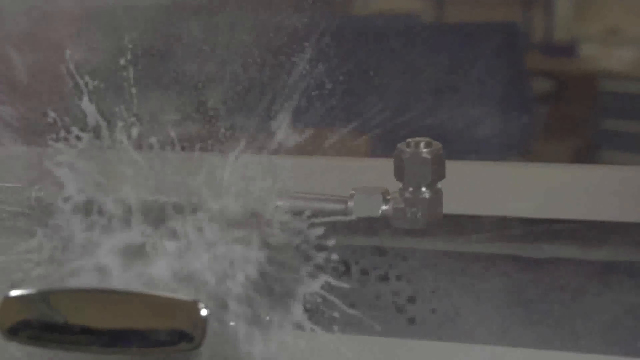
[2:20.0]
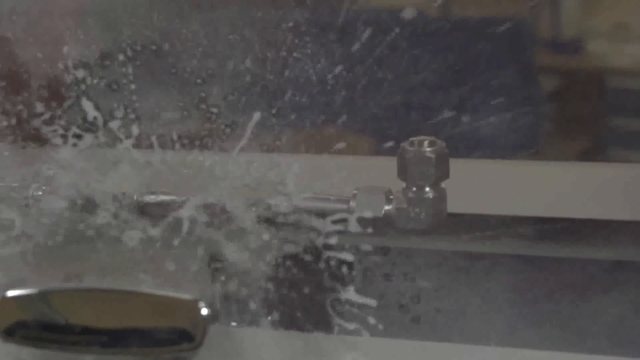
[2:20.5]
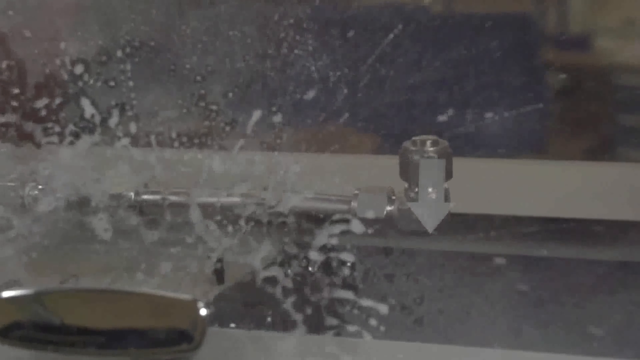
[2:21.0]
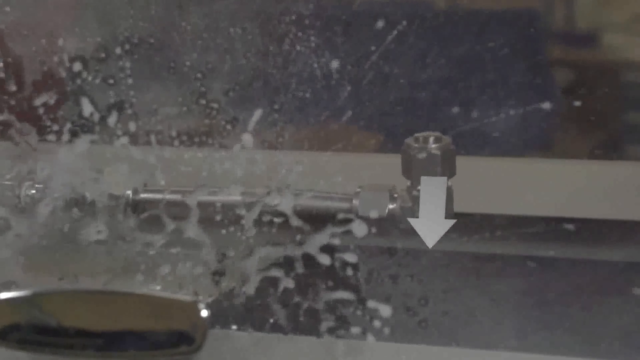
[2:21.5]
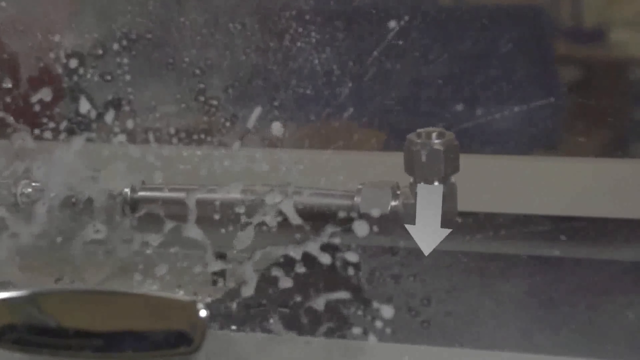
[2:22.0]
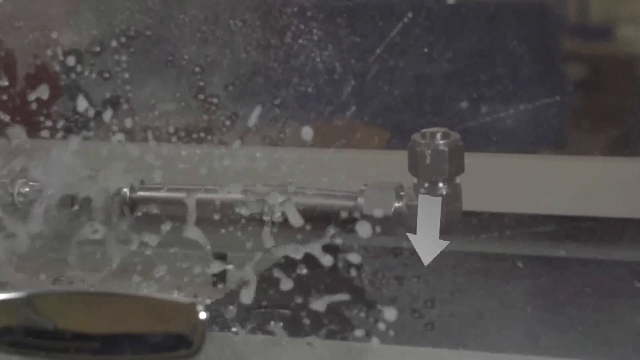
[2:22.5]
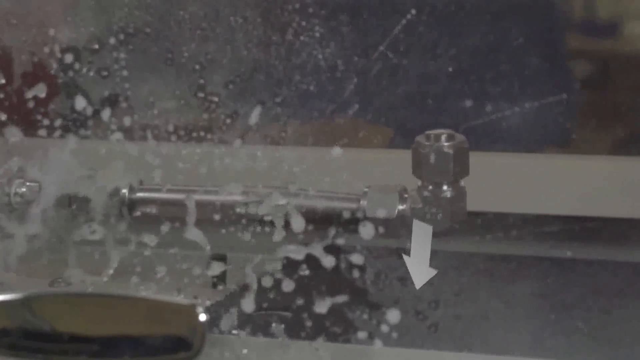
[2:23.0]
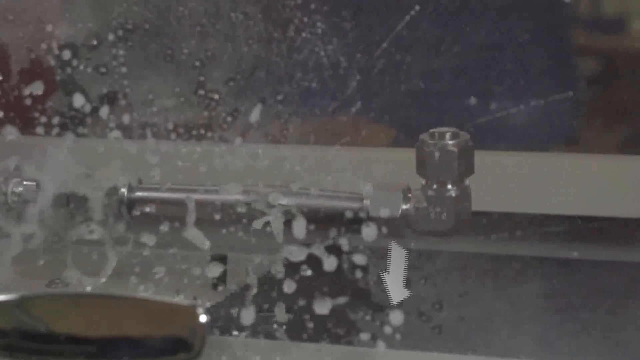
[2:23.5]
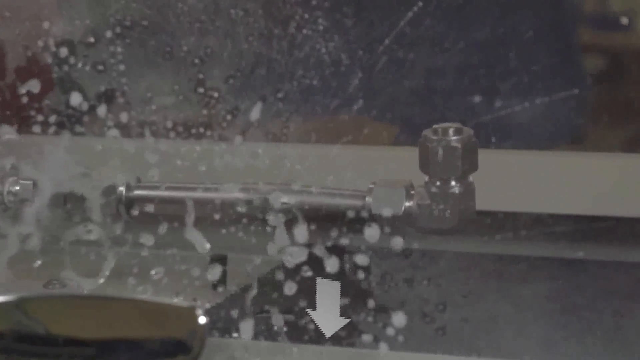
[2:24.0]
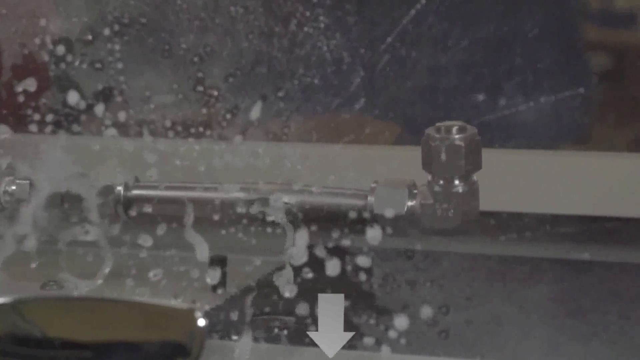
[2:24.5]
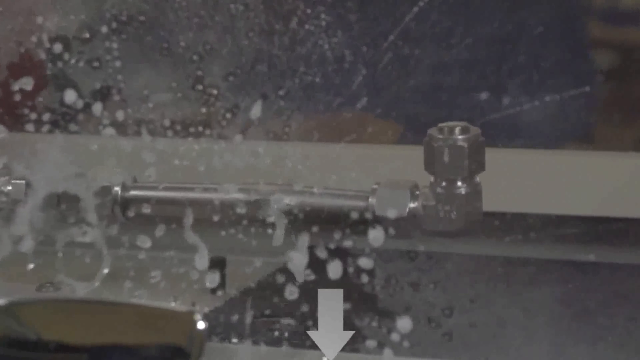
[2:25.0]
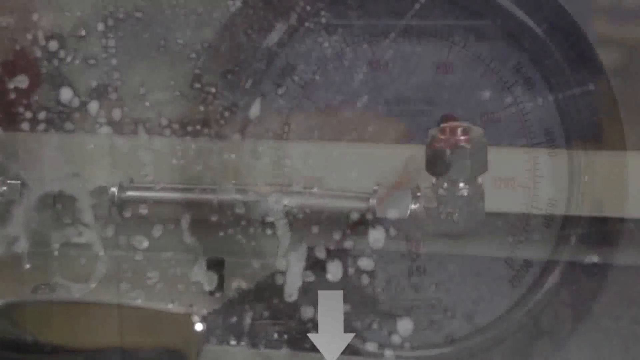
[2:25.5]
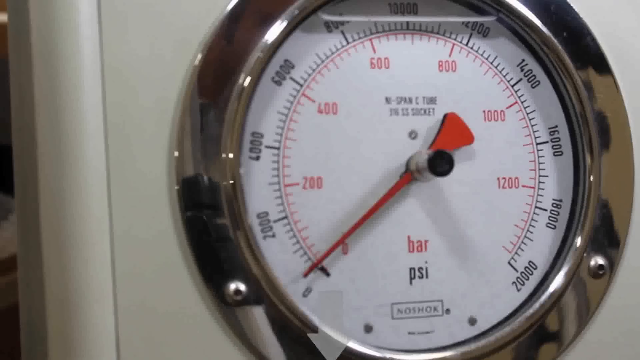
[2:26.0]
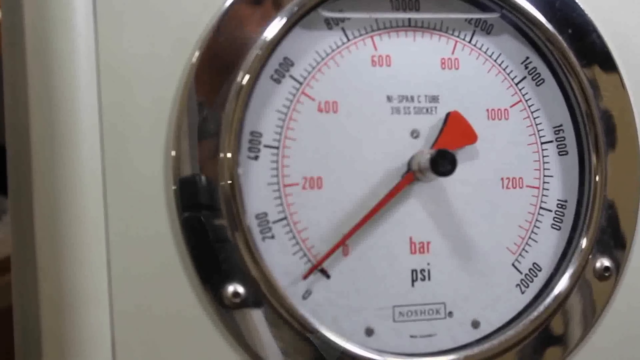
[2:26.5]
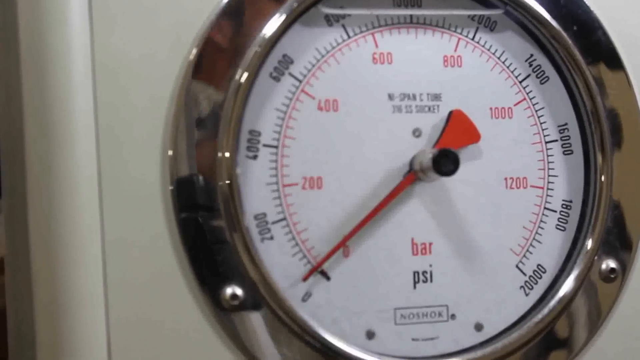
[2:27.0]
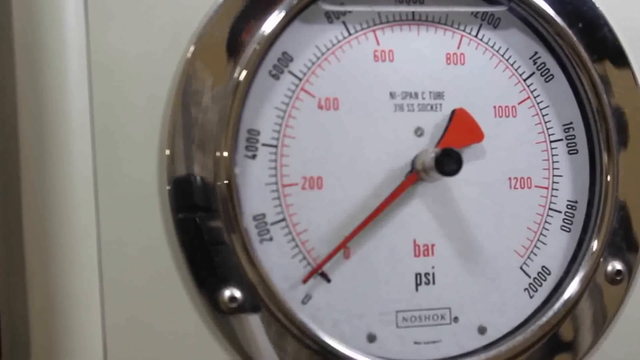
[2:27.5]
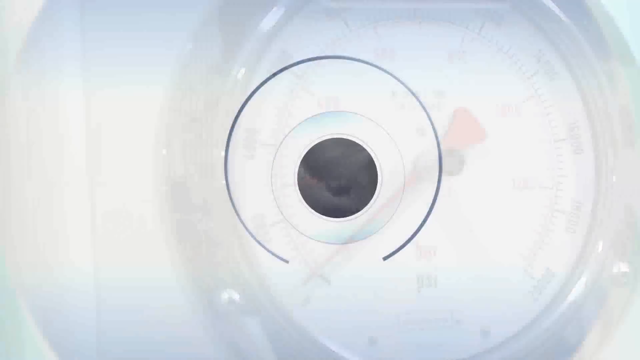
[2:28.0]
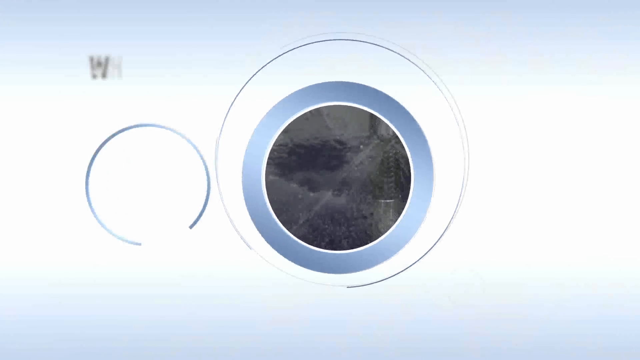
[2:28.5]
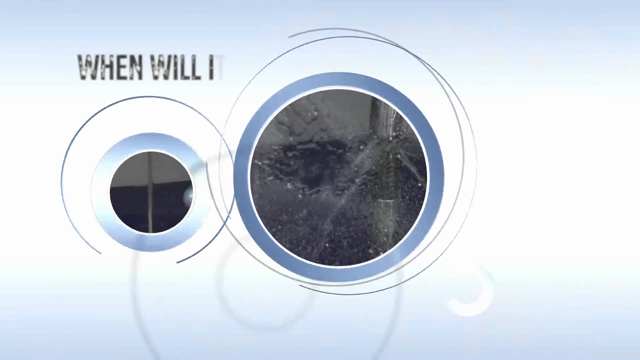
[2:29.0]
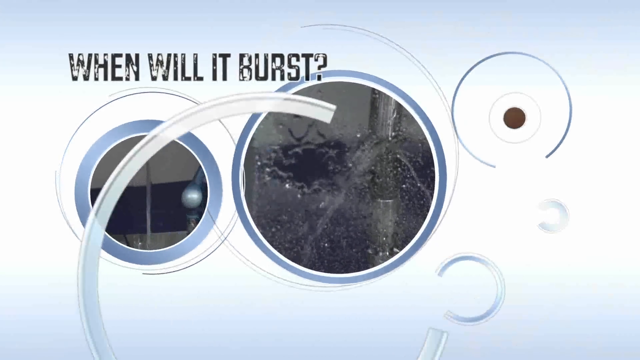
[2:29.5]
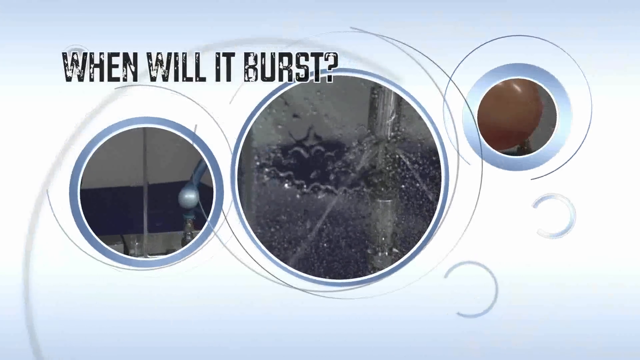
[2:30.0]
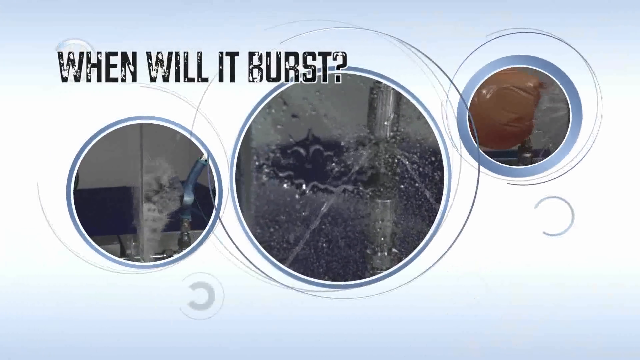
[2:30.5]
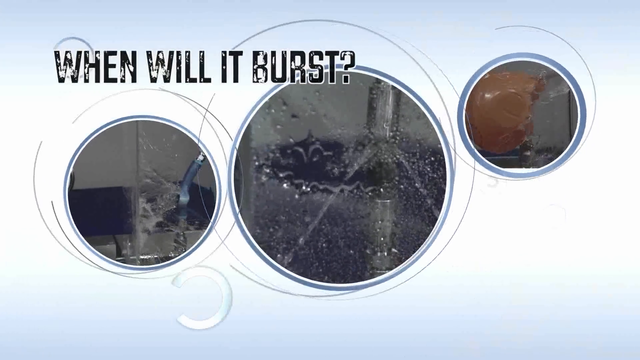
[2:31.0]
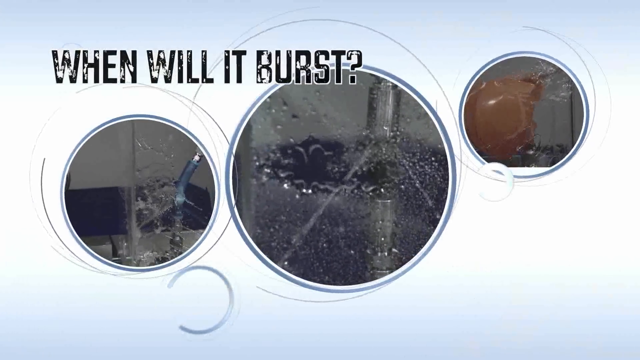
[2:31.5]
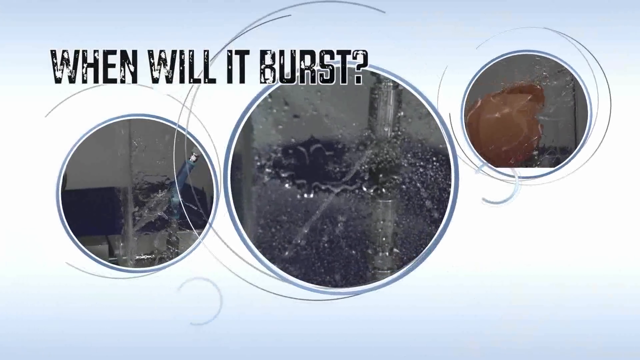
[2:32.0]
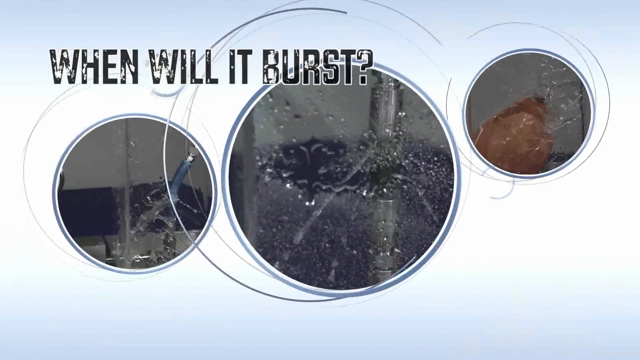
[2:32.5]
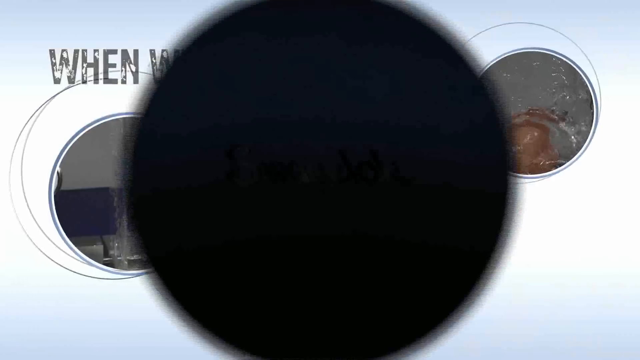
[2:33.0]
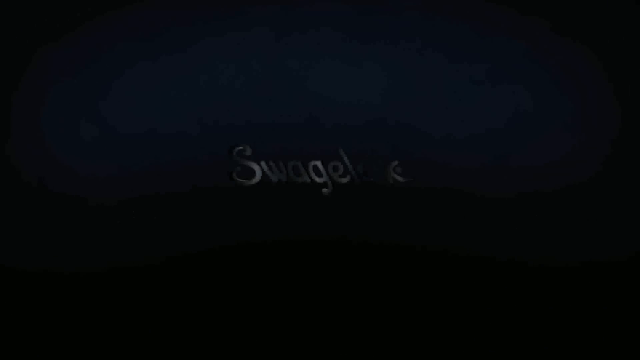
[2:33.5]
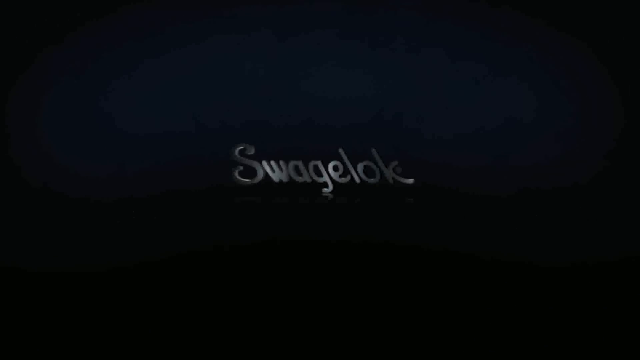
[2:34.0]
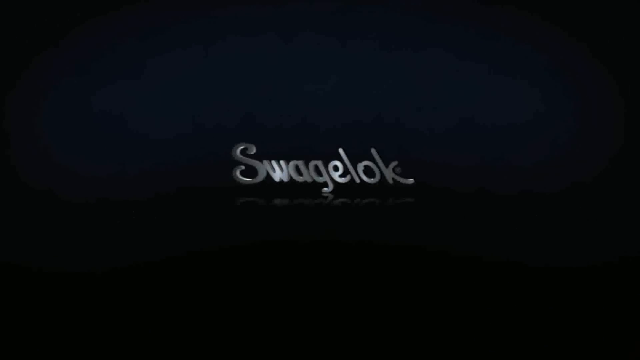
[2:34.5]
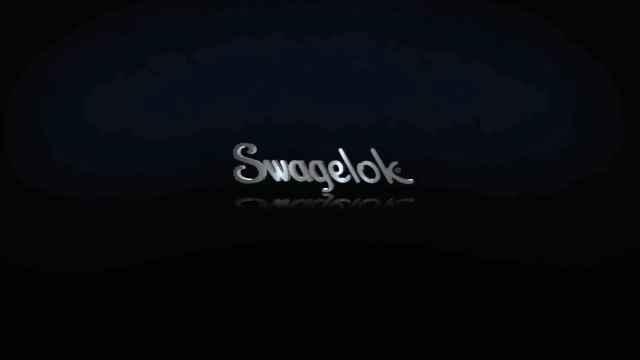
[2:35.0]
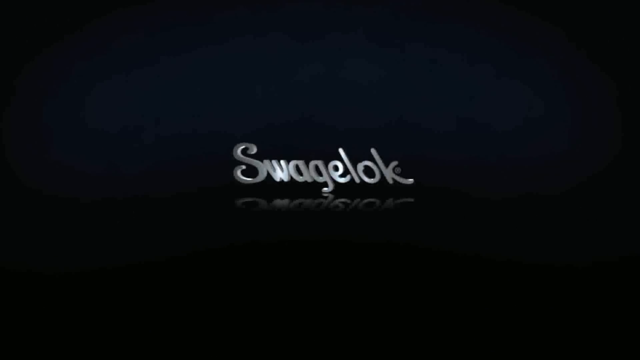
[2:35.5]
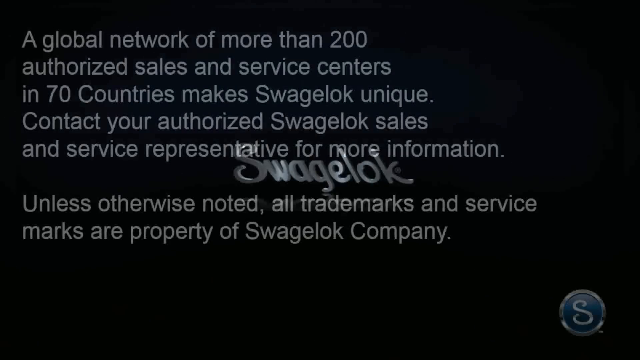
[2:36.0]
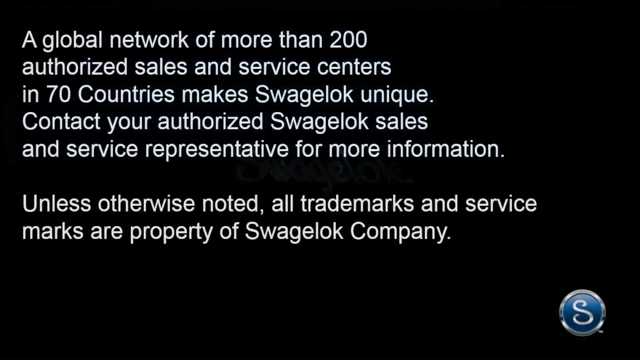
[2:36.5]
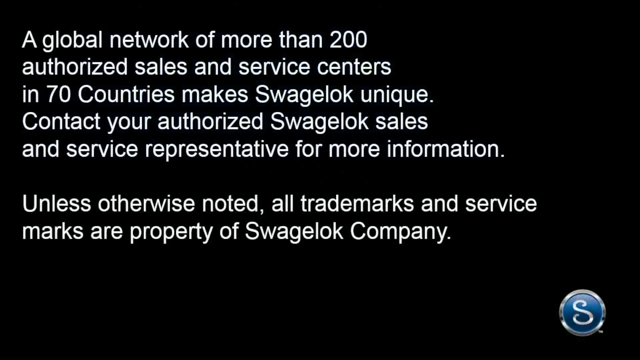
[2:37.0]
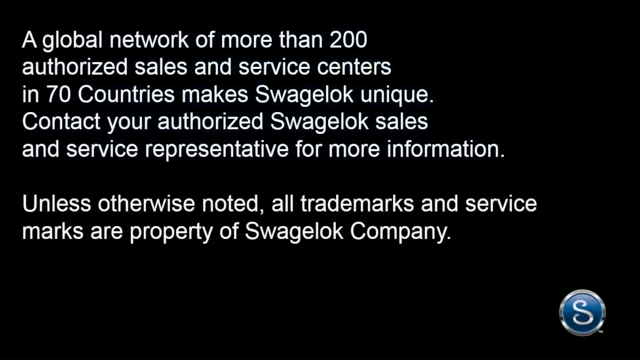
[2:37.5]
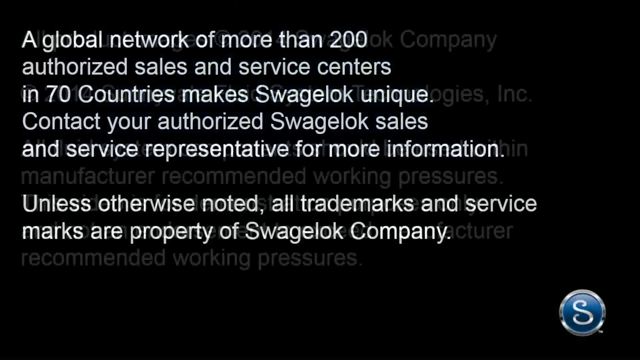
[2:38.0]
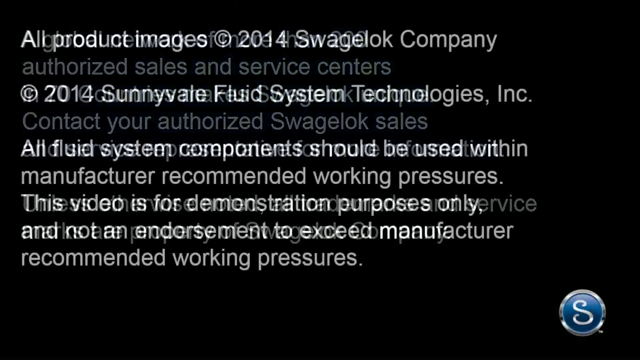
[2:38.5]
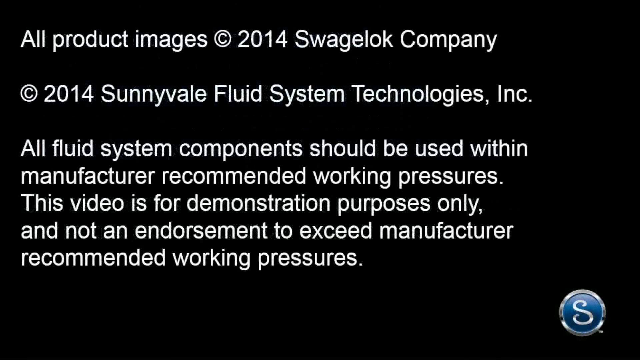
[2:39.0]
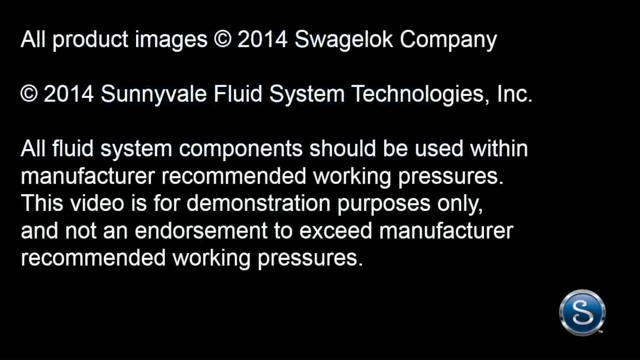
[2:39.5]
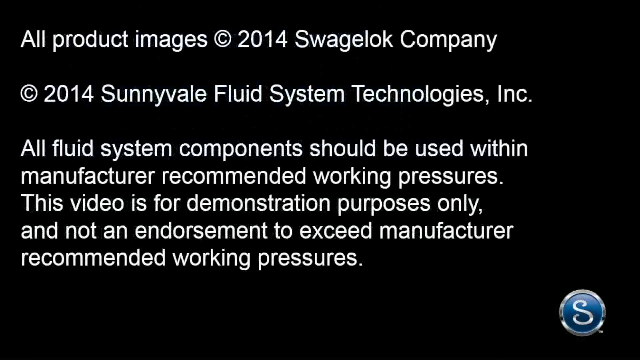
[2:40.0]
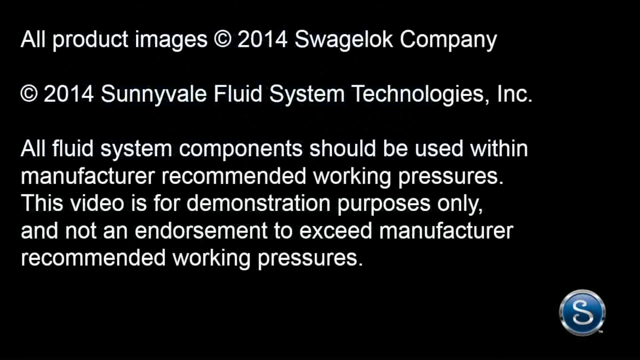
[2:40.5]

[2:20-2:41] The aftermath of the burst is shown: the pipe has burst inside the chamber, which appears to be for measuring the pipe's integrity. A close-up shows the pressure gauge, which has a white face with black and red numbers and a chrome outside. Graphics then pop up that again say "when will it burst?", and within them are what look to be three separate real-life videos of pipes in motion. The Swagelok logo follows. At the end of the video, text on a black screen reads: "A global network of more than 200 authorized sales and service areas in 70 countries makes Swagelok unique. Contact your authorized Swagelok sales and service representative for more information. Unless otherwise noted, all trademarks and service marks are property of Swagelok Company."